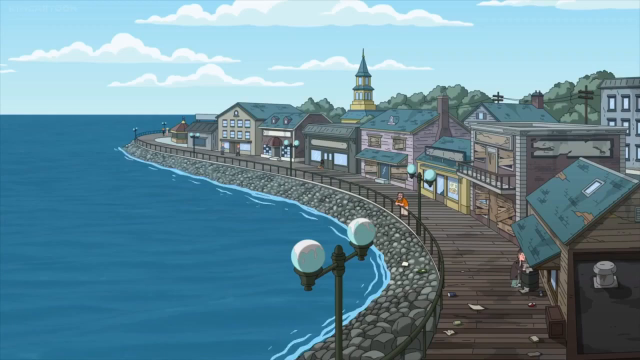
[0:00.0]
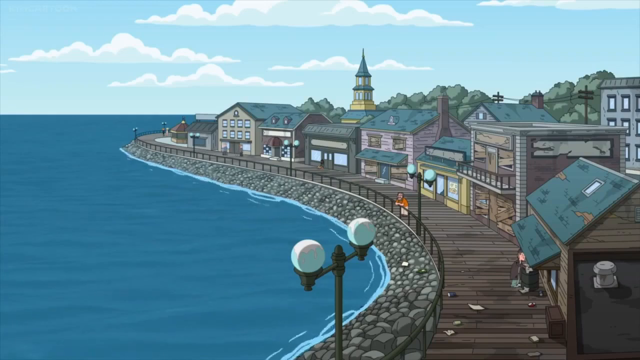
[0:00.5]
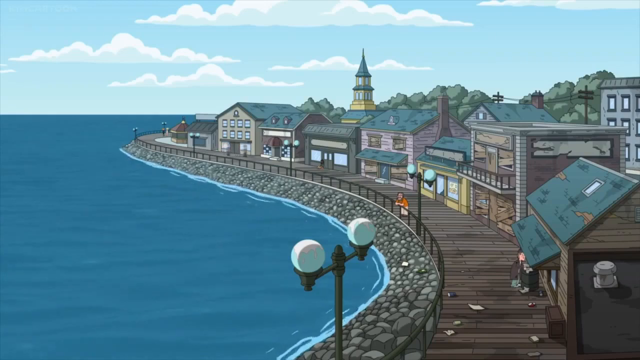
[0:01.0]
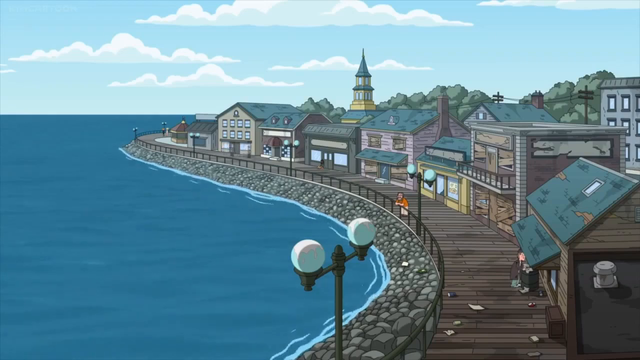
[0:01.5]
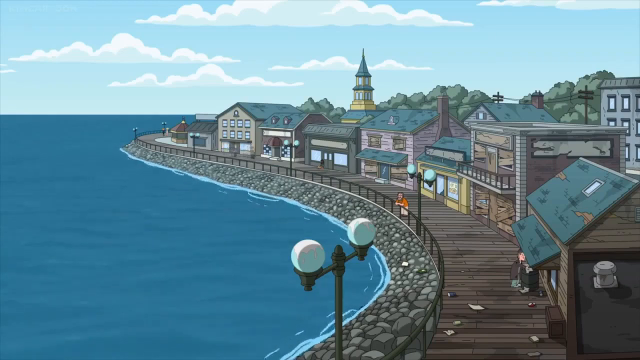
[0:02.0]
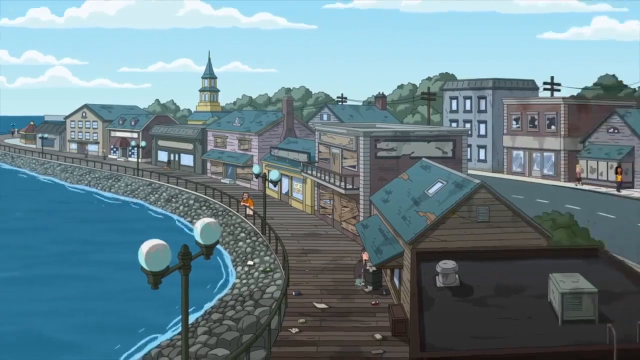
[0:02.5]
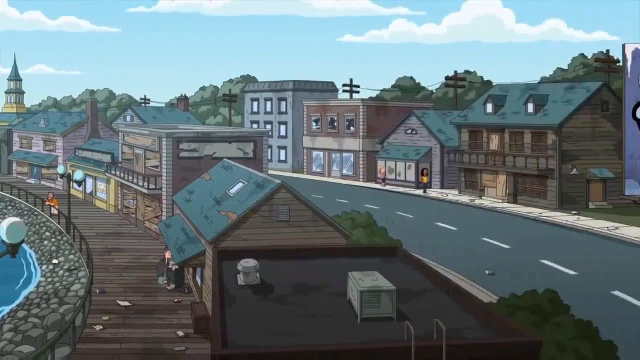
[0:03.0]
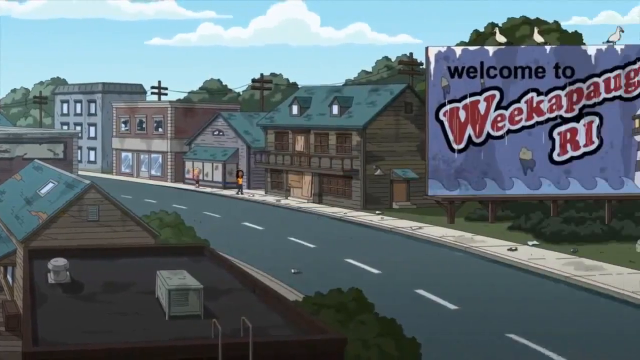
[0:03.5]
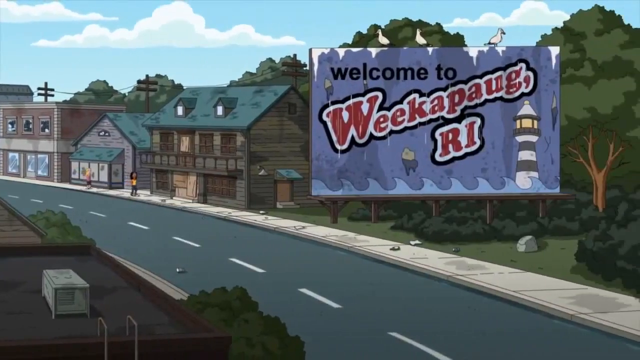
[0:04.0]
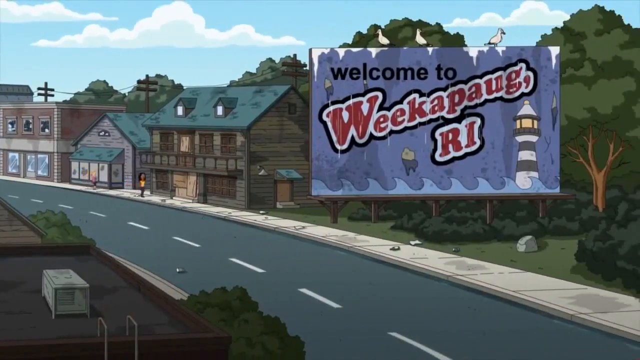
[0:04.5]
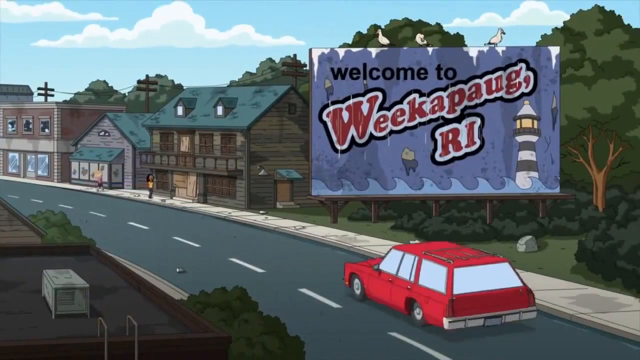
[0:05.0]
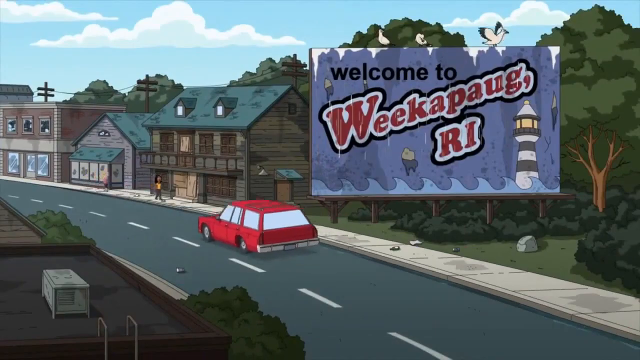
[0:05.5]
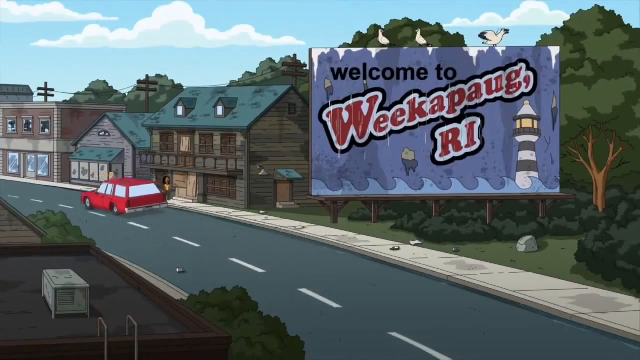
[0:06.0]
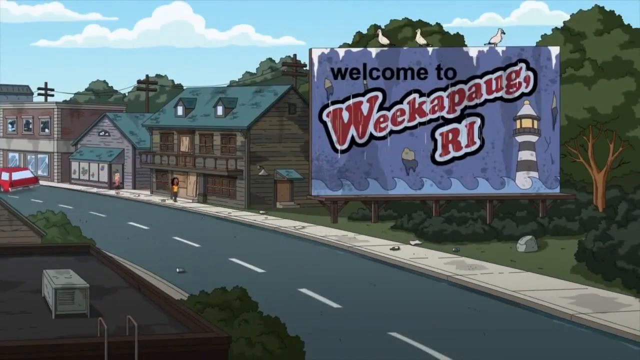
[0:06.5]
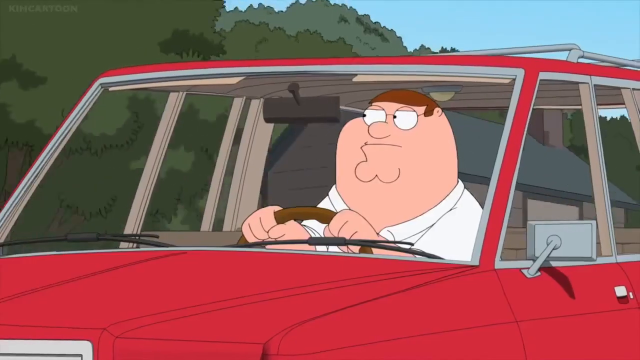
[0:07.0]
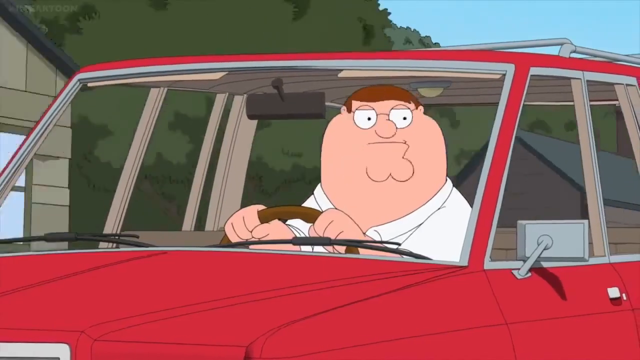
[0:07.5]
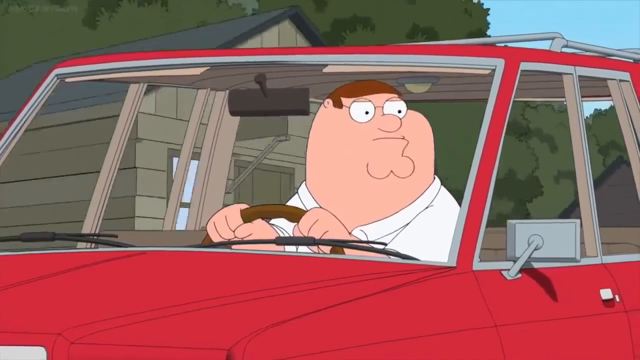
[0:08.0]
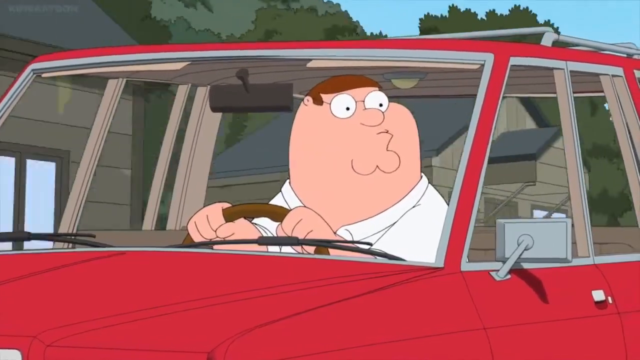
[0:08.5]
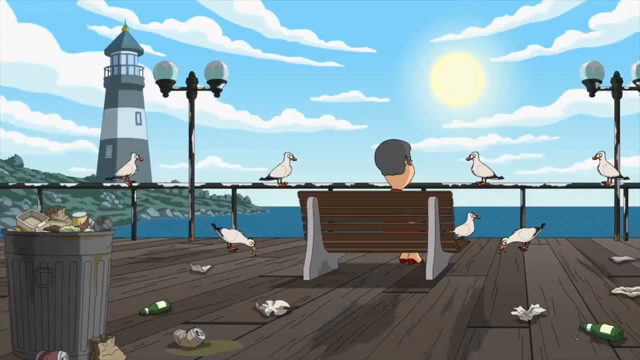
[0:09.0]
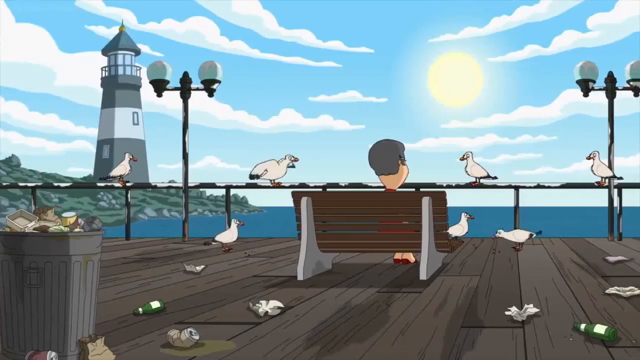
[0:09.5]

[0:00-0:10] A cartoonish scene shows a lake with some houses and a road, with the text "welcome to Weakpaw" on screen. A man sits on a park bench with some ducks around him, while another man is kind of standing over the fence, looking into the water. The area looks like a boardwalk, with different buildings that have no names on them and some little lamp posts. One side is the boardwalk, and behind it is a little street with more buildings, where some people are walking. The water is crisp and blue, there are a few clouds, and trees are visible in the skyline.